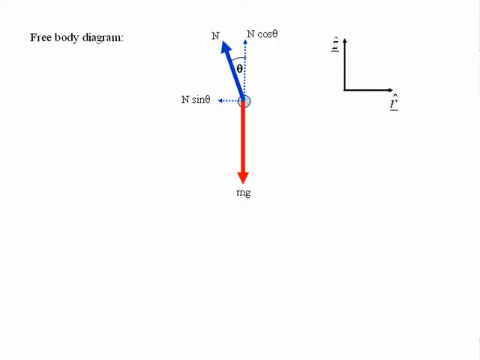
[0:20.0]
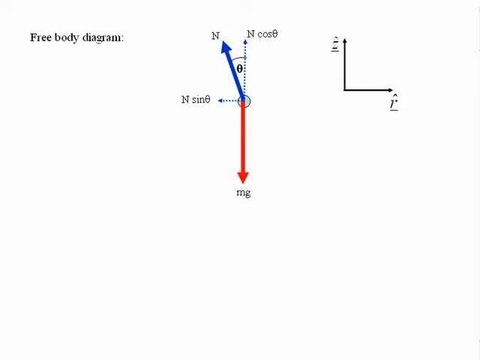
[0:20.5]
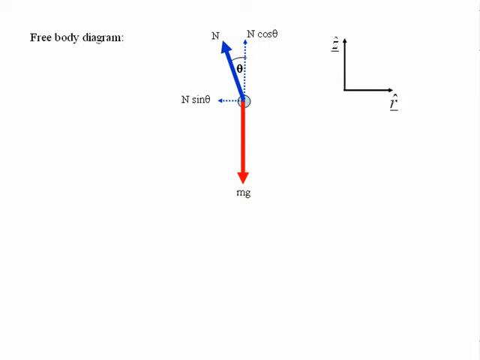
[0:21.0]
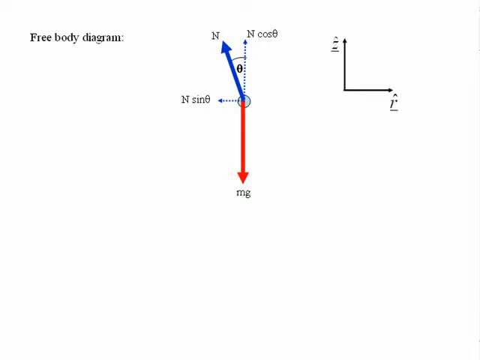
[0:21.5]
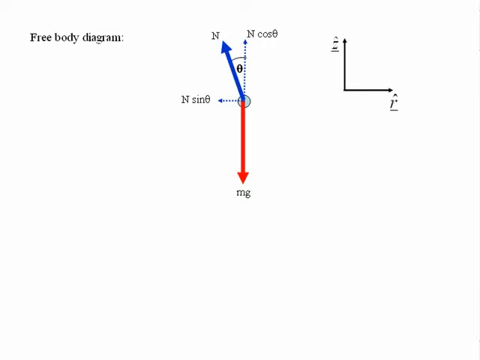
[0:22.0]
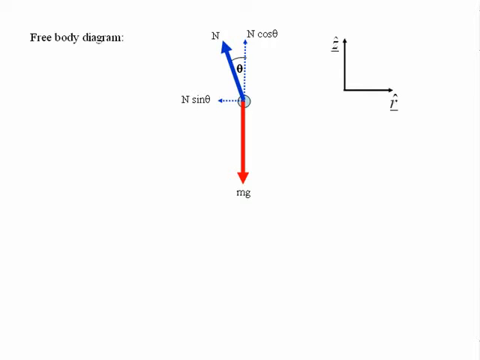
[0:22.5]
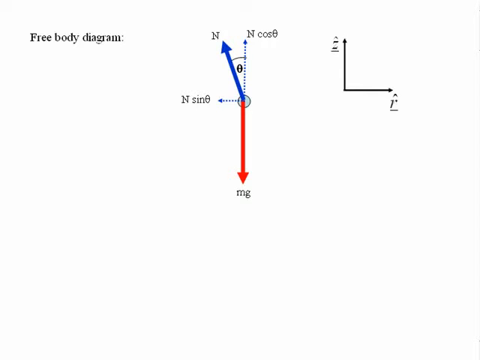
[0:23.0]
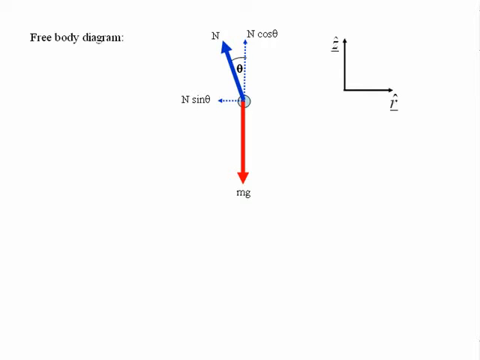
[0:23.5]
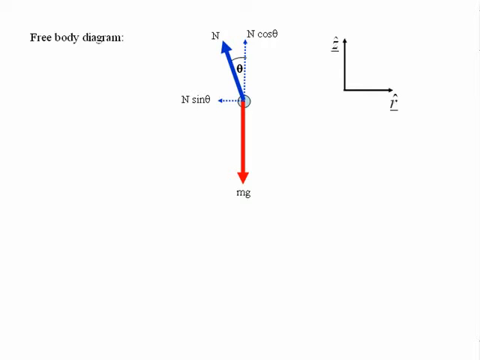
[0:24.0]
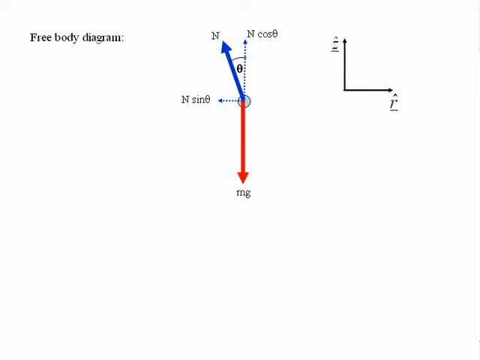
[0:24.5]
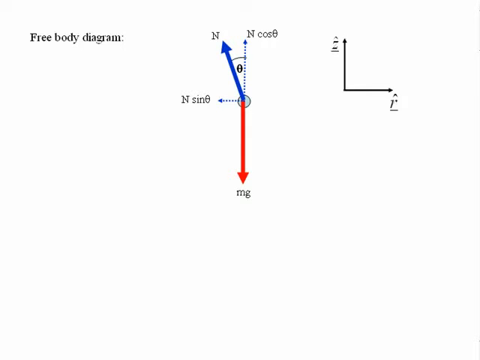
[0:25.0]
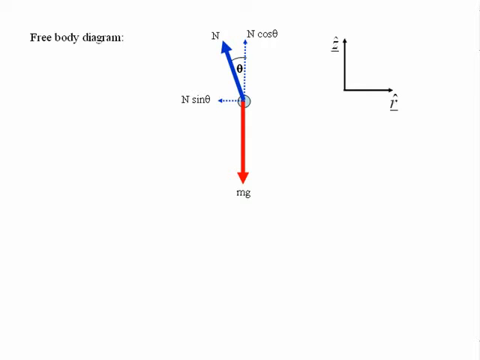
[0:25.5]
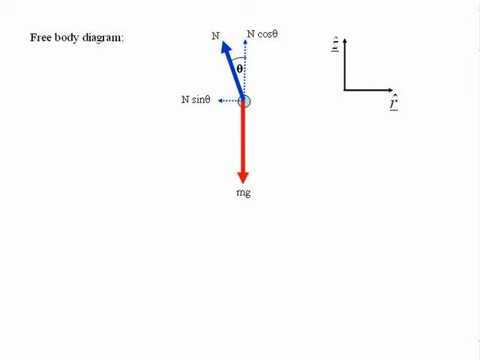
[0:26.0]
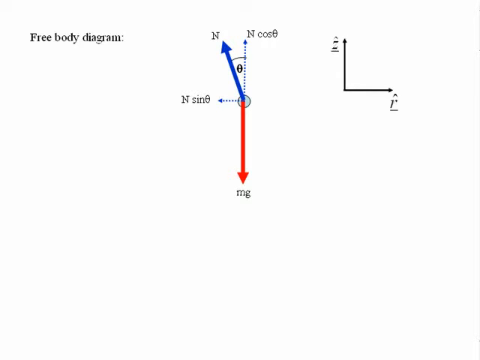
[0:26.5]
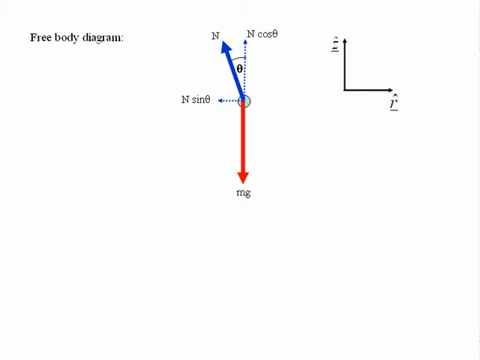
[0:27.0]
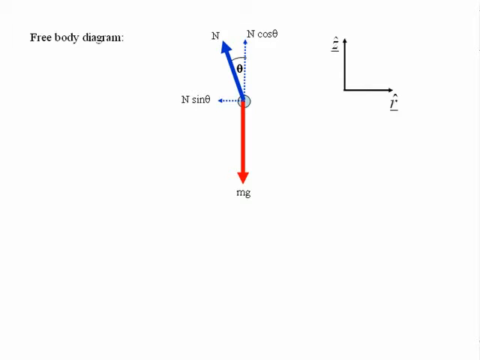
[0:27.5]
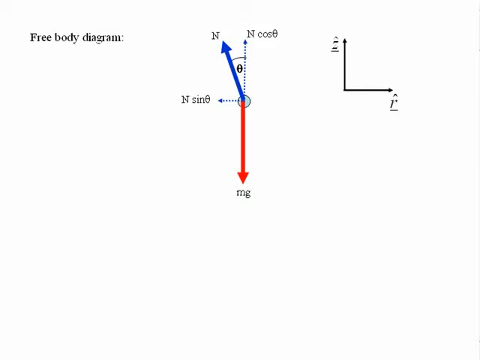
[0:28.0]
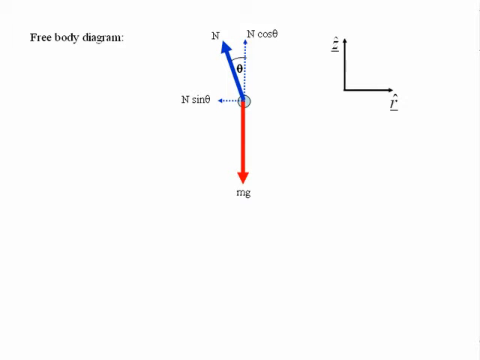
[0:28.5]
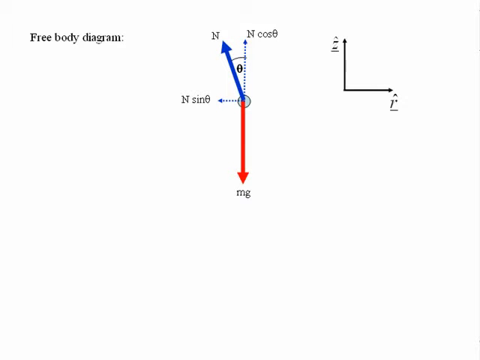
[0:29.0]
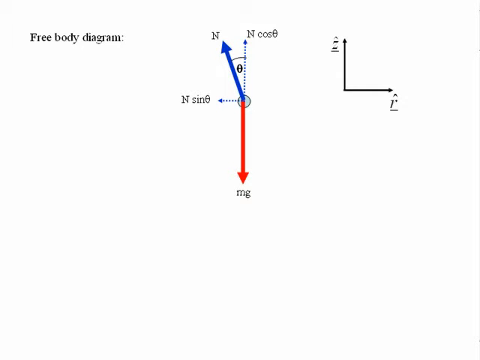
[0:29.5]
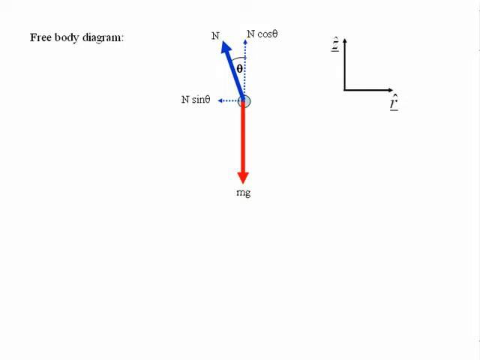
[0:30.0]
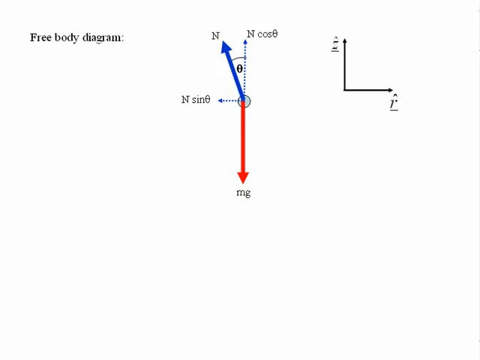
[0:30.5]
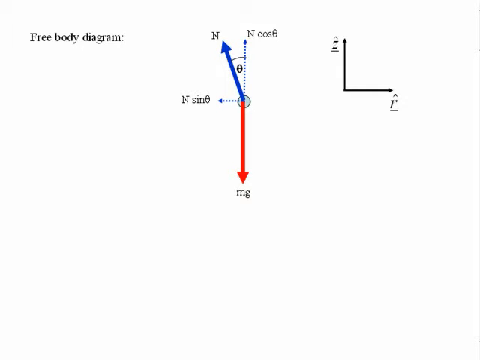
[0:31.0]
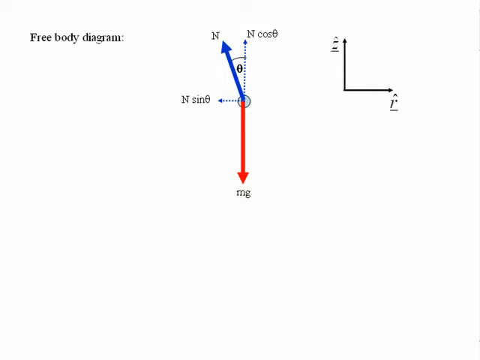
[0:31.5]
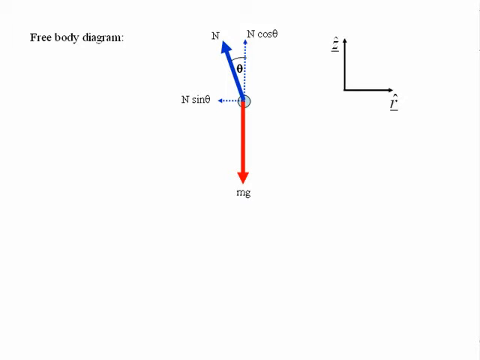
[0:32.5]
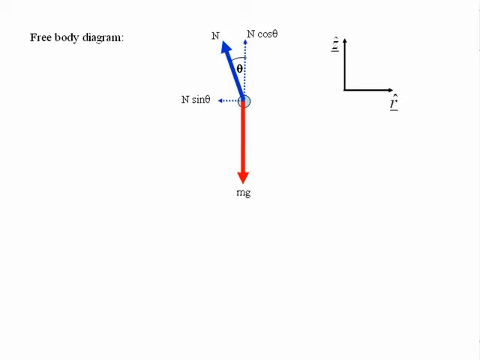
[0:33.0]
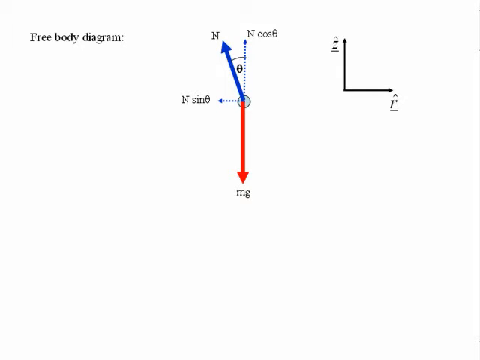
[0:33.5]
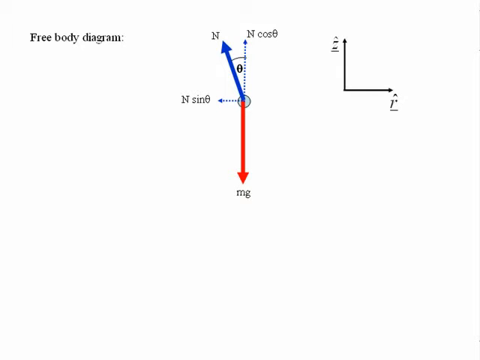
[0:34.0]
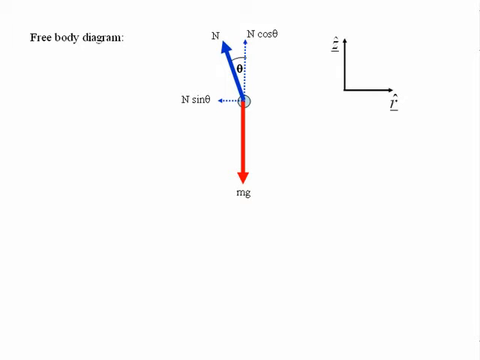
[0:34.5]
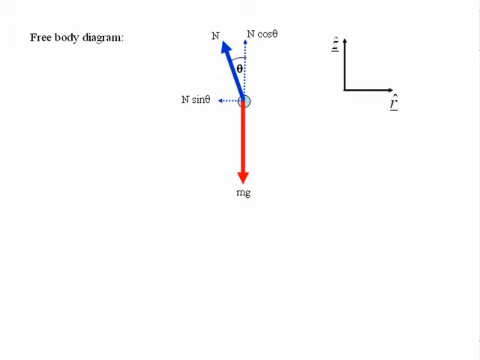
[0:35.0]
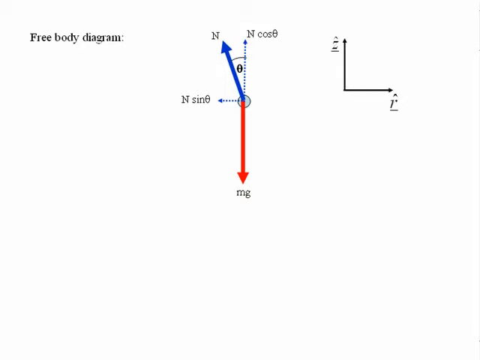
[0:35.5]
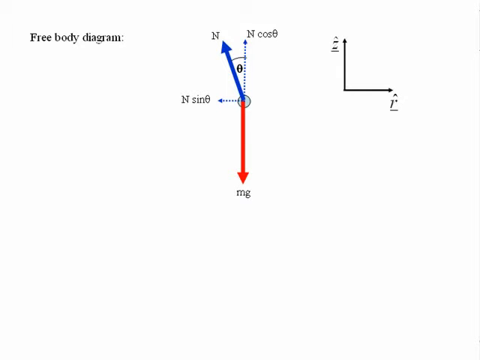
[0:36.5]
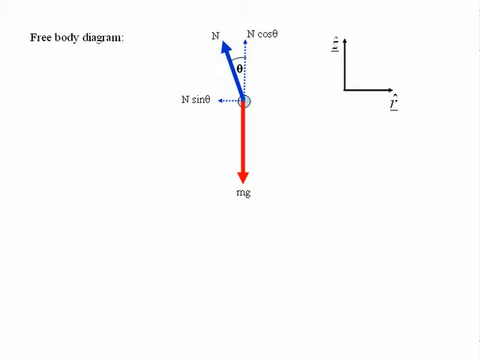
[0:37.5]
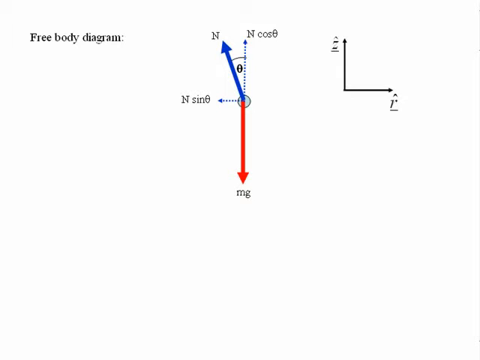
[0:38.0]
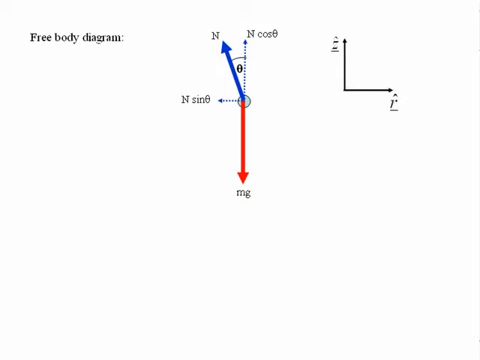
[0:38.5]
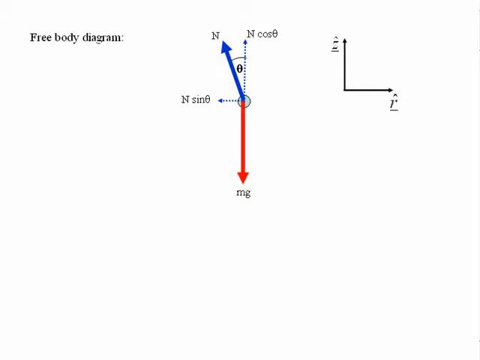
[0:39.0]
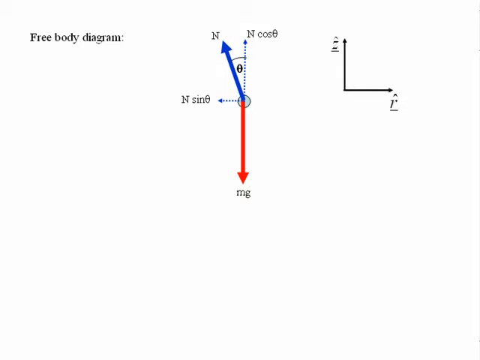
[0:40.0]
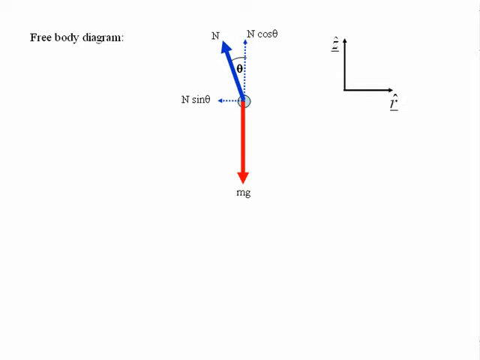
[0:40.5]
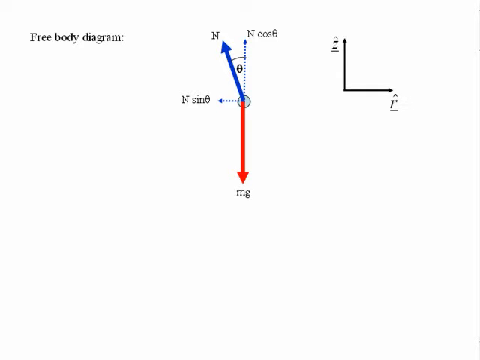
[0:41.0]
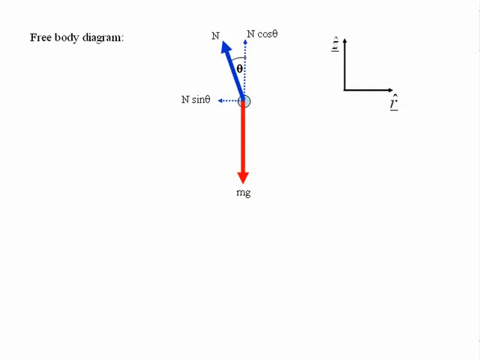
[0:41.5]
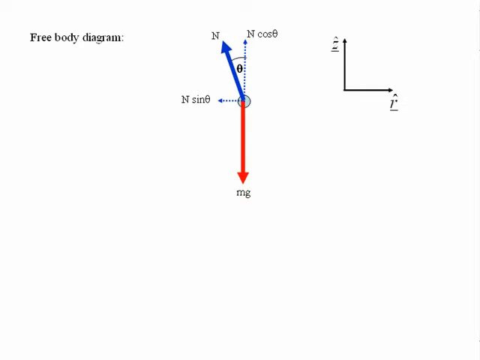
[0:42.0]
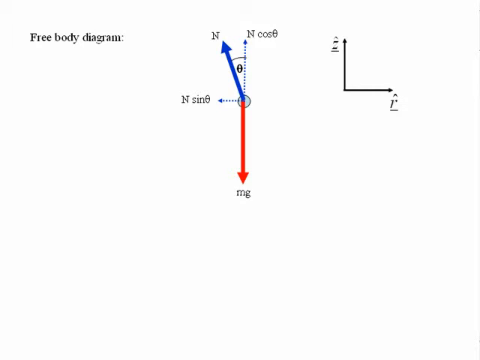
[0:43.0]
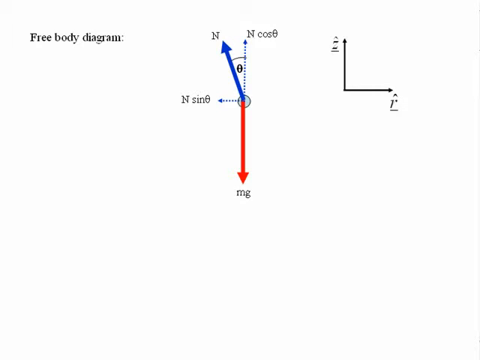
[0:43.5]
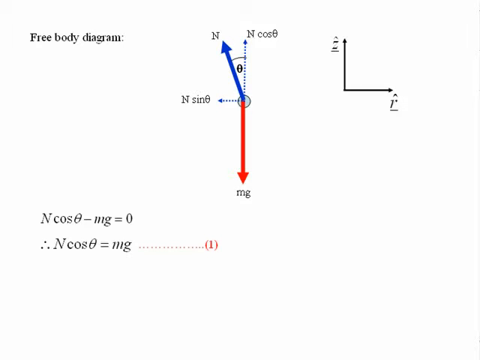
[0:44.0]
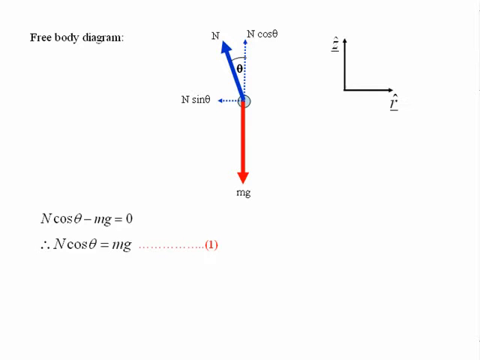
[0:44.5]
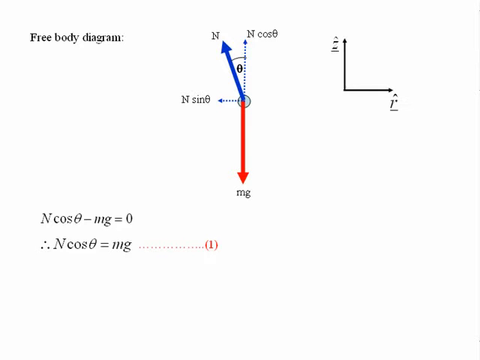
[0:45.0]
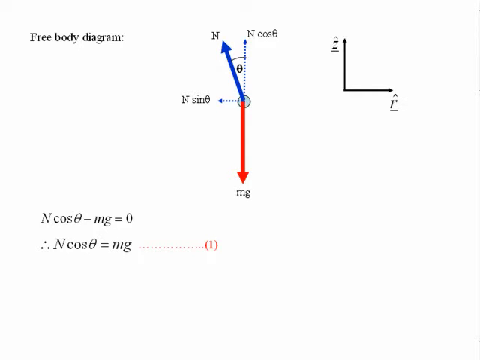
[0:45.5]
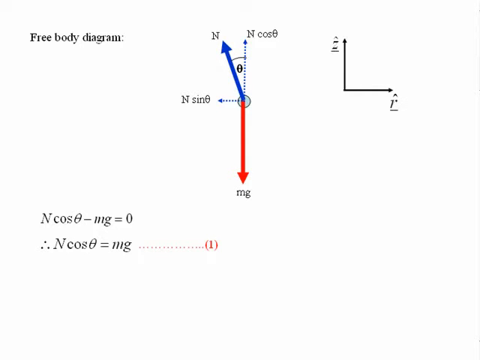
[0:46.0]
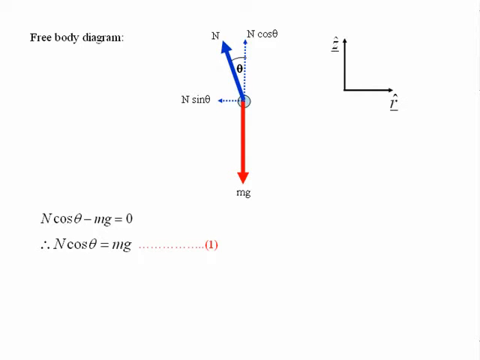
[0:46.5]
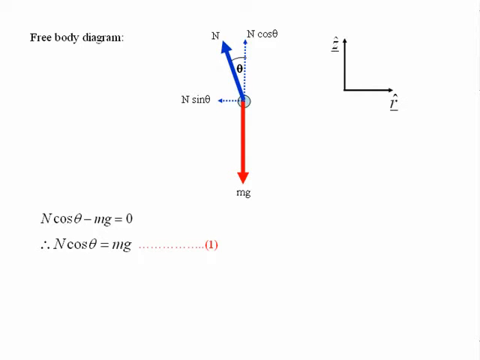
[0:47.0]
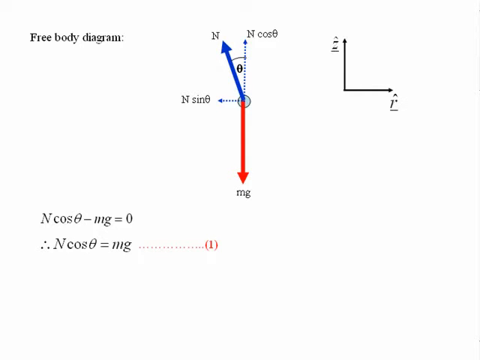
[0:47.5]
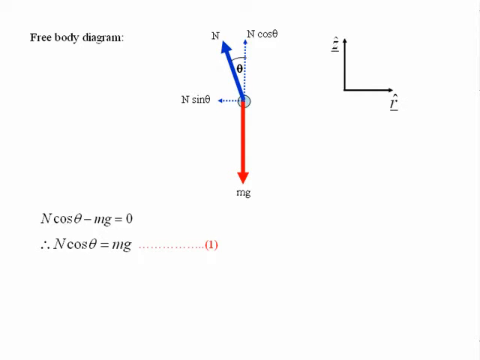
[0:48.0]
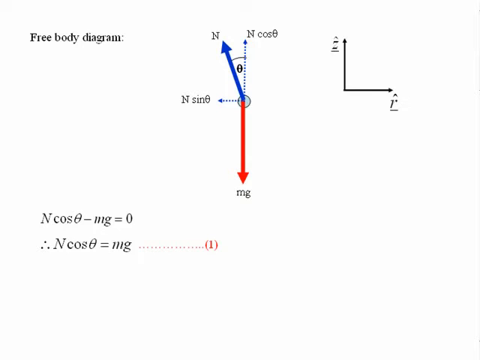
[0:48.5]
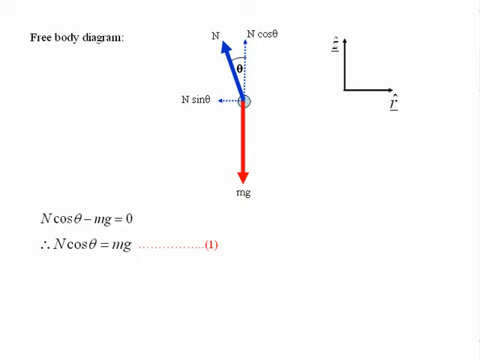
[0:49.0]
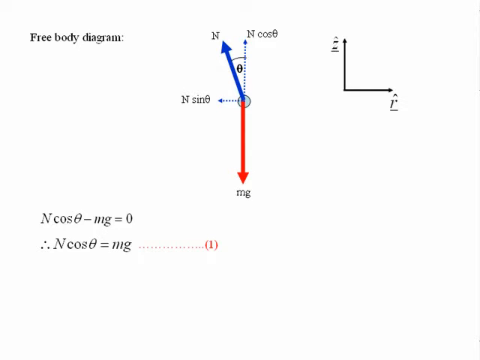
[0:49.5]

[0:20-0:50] The diagram with several arrows shows a few different angles with cosine and sine symbols associated with them. An equation then appears: n cos theta minus mg equals zero, with n cos theta equals mg ... (1). The setting does not change, and no people or animals appear. The screen is kind of blank apart from the free body diagram, with text in the top left, and a formula that appears kind of in the middle bottom left of the page.